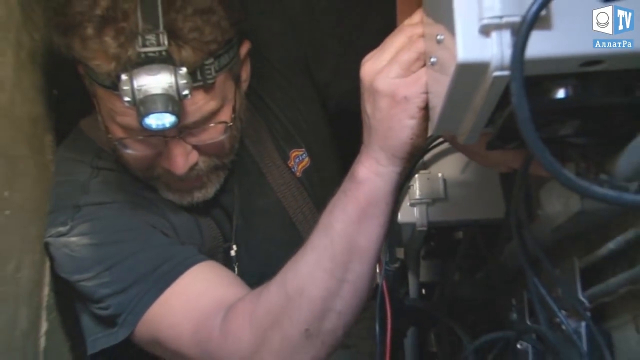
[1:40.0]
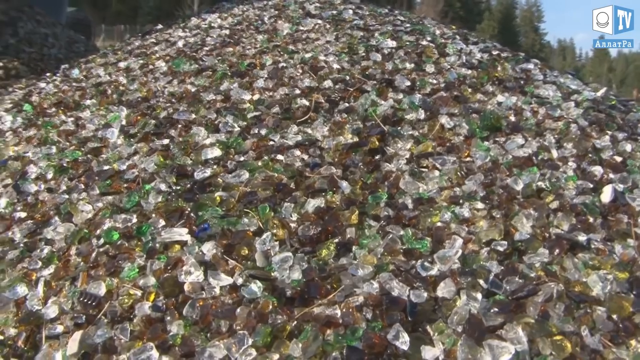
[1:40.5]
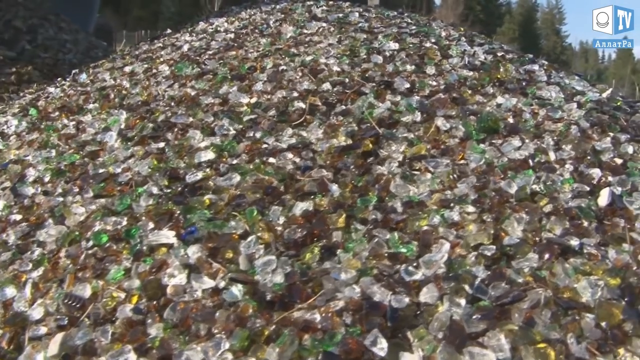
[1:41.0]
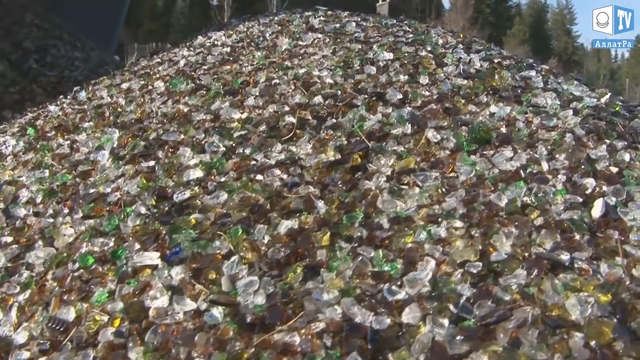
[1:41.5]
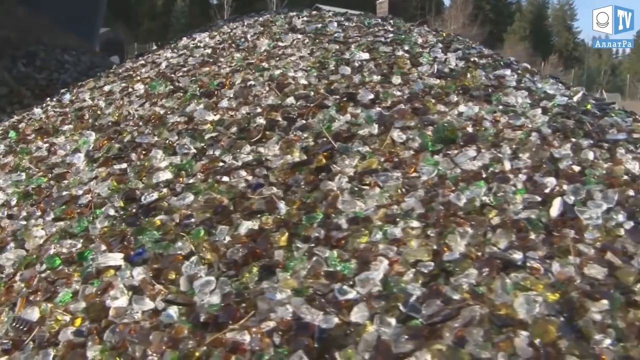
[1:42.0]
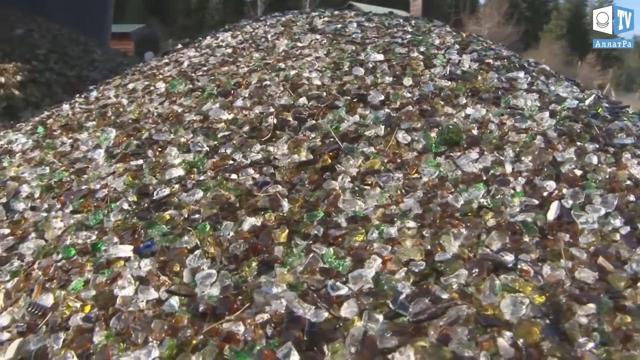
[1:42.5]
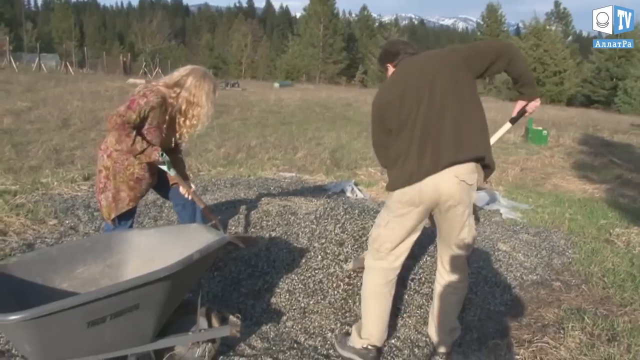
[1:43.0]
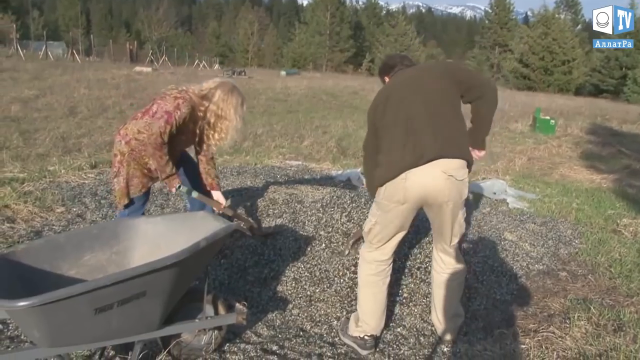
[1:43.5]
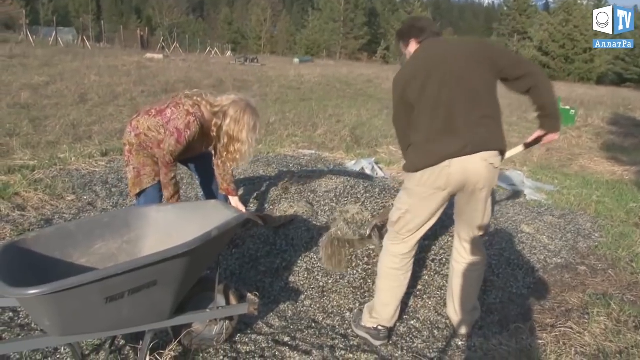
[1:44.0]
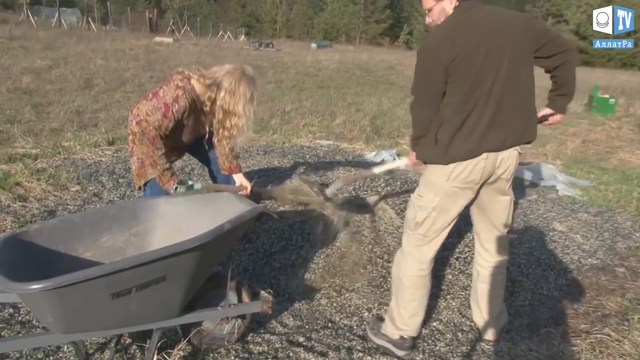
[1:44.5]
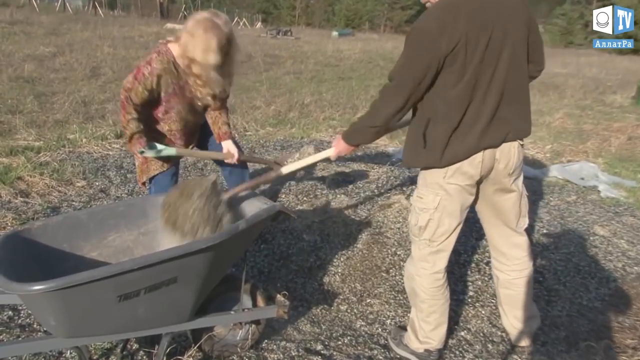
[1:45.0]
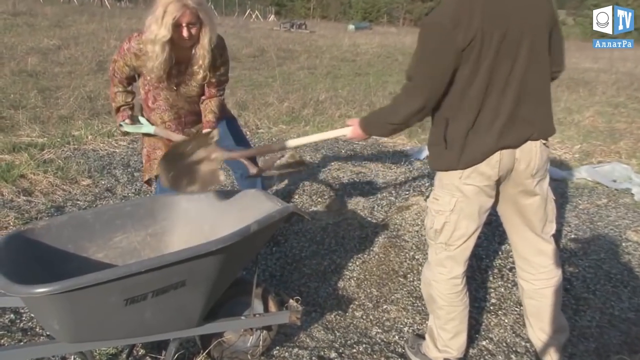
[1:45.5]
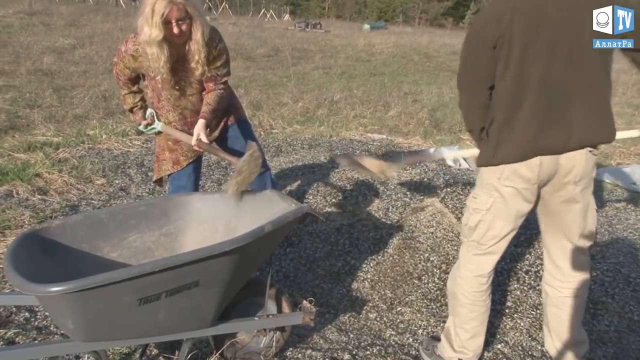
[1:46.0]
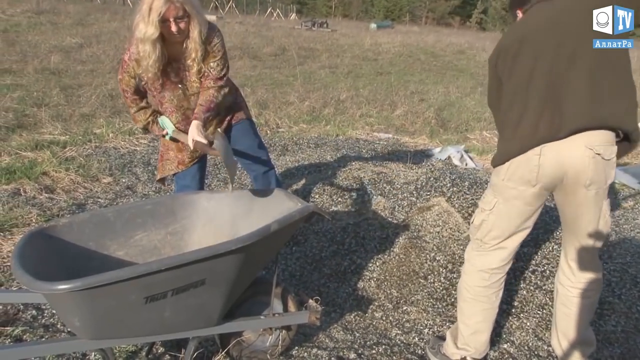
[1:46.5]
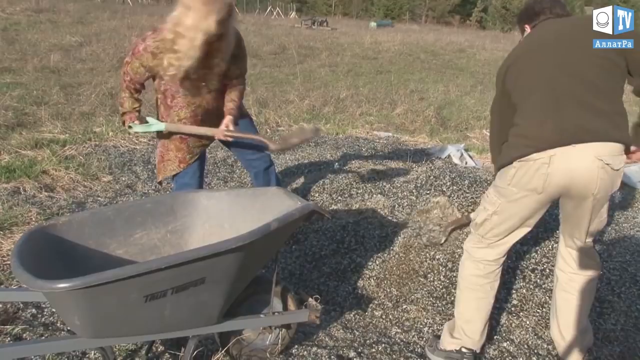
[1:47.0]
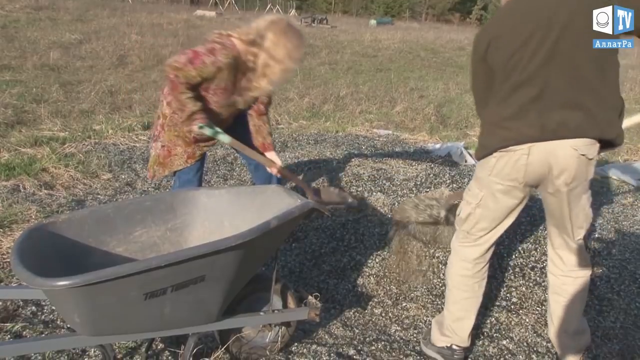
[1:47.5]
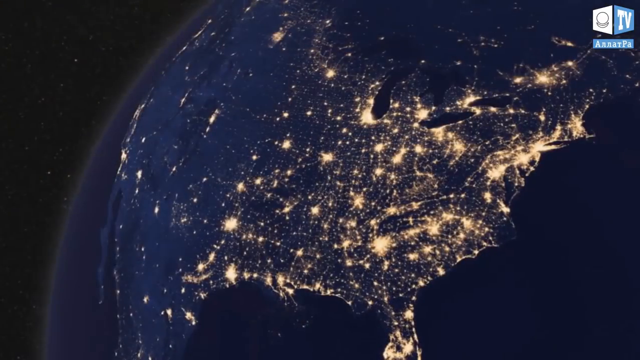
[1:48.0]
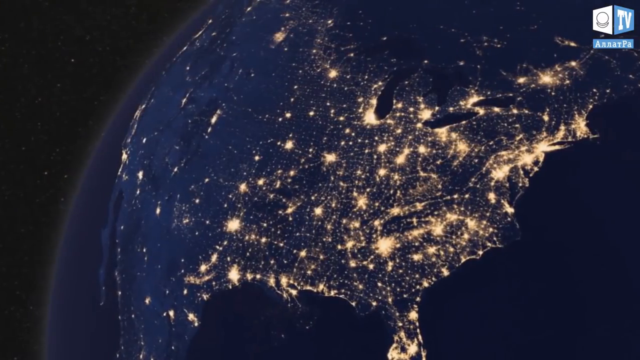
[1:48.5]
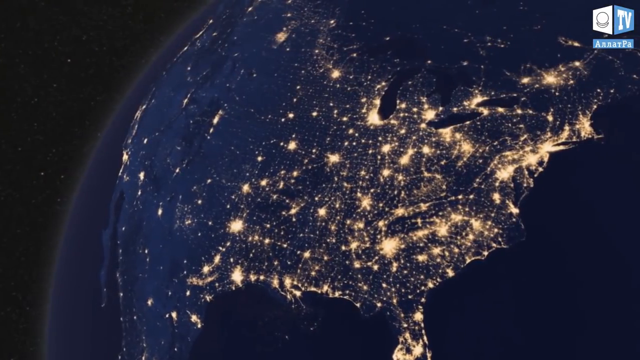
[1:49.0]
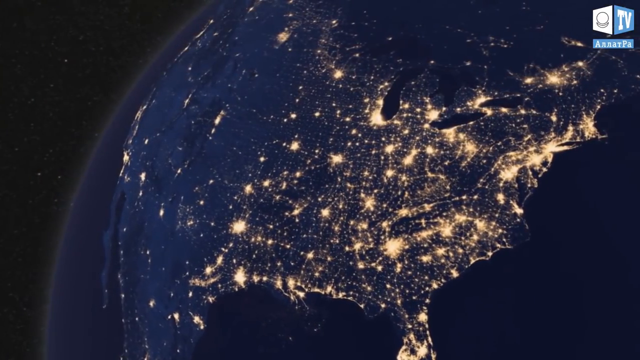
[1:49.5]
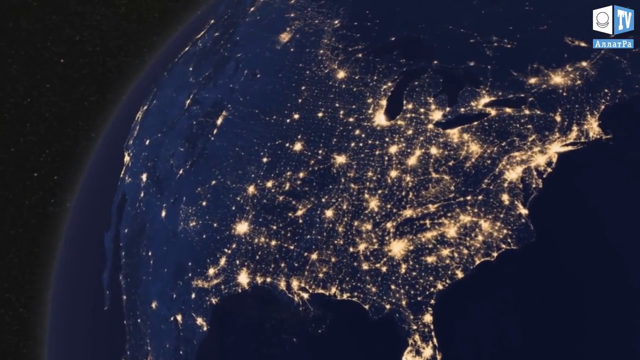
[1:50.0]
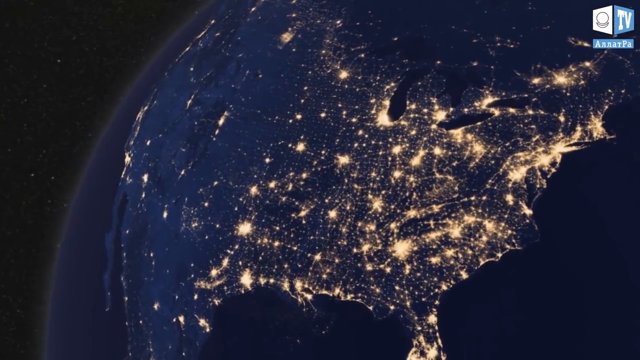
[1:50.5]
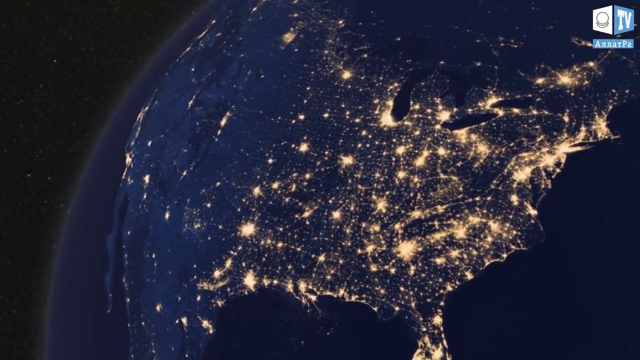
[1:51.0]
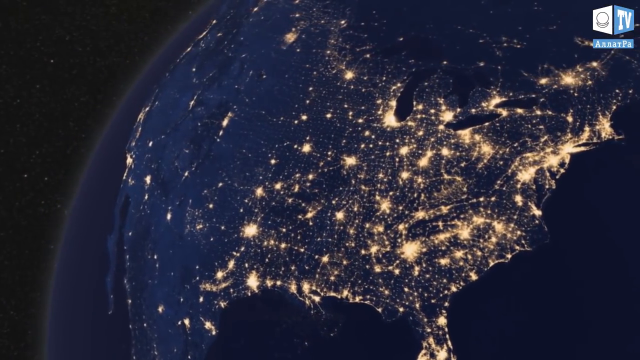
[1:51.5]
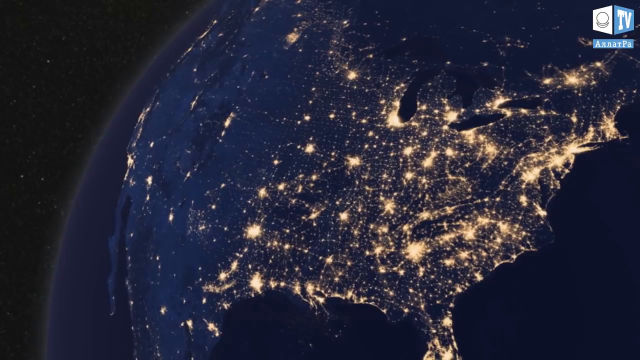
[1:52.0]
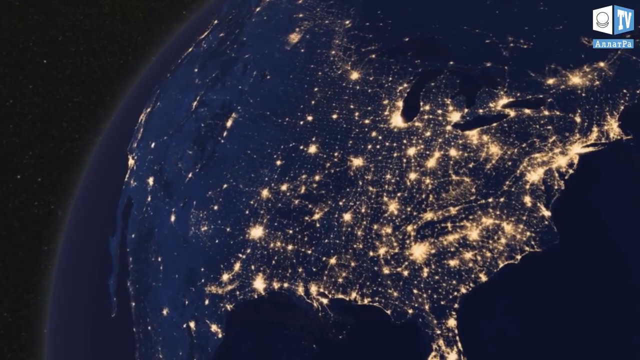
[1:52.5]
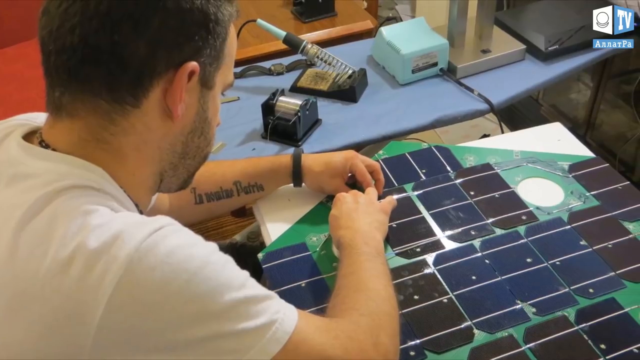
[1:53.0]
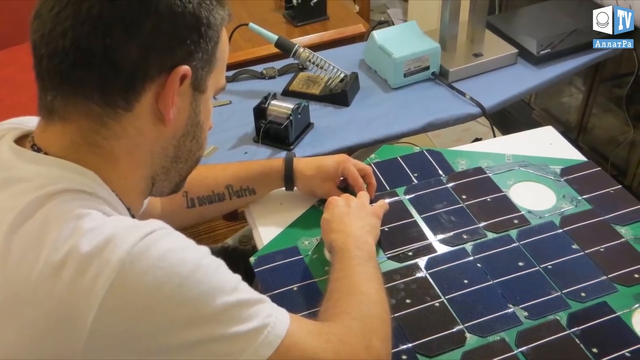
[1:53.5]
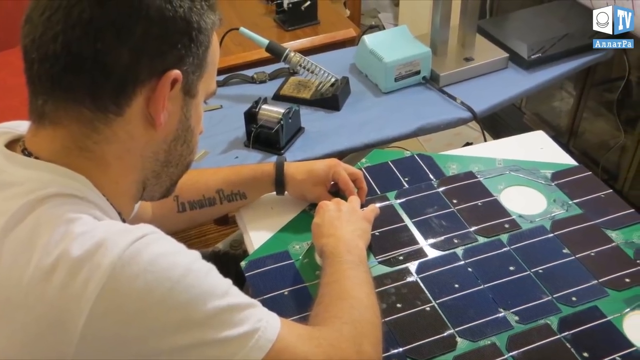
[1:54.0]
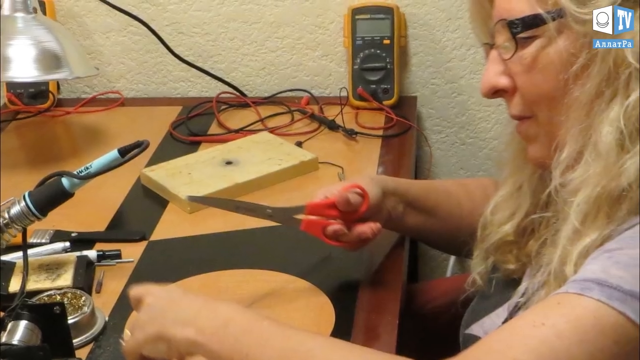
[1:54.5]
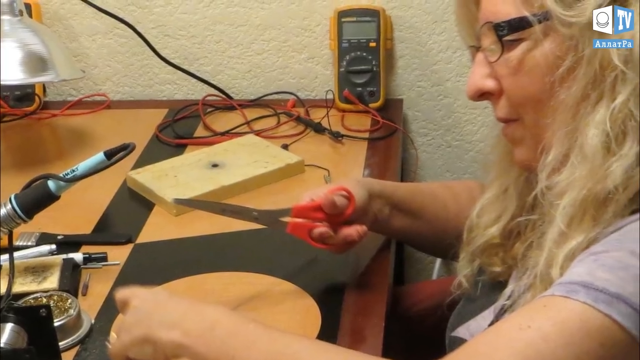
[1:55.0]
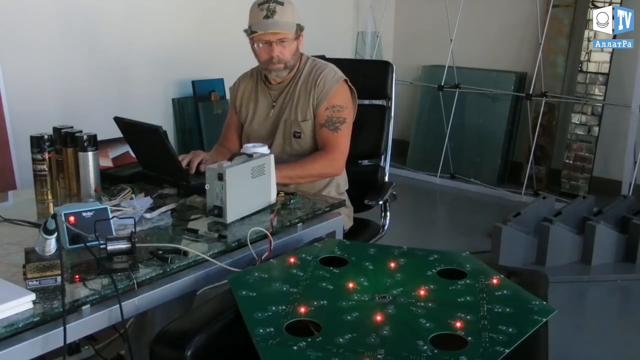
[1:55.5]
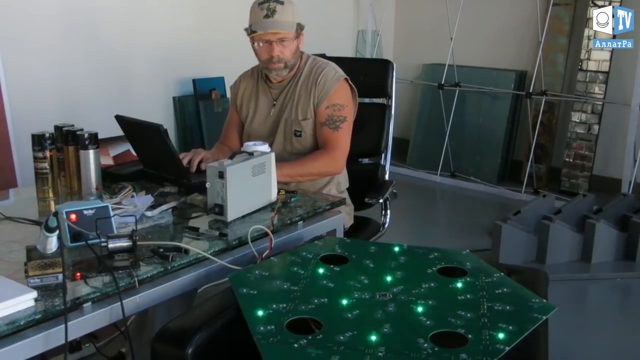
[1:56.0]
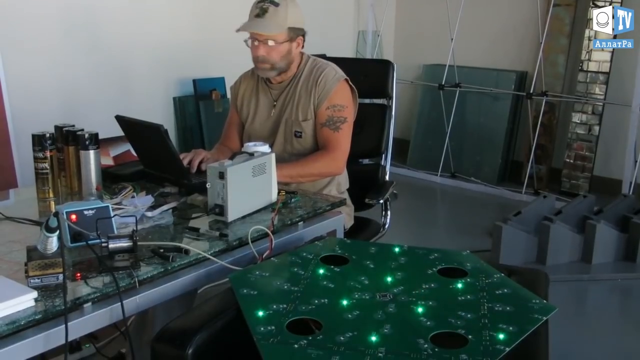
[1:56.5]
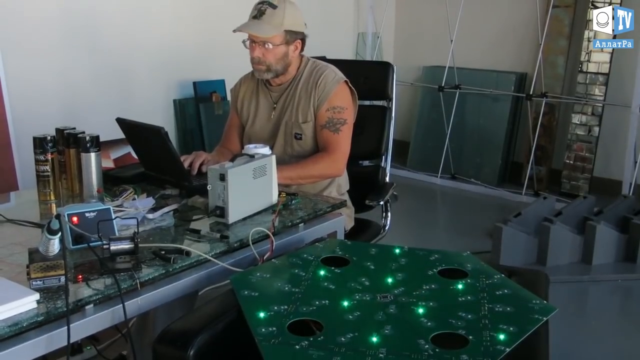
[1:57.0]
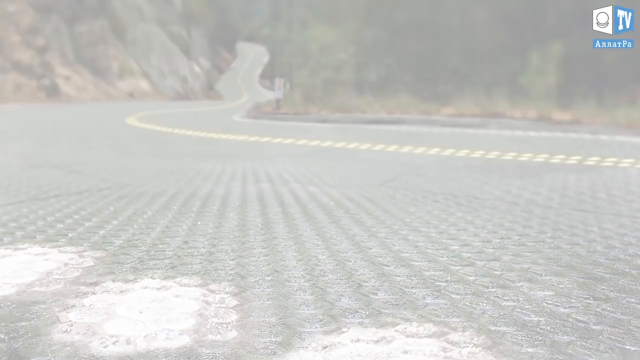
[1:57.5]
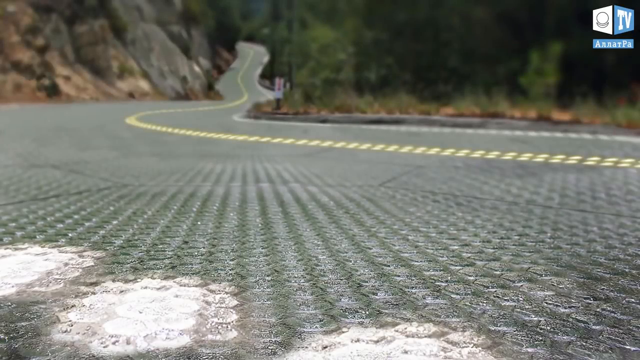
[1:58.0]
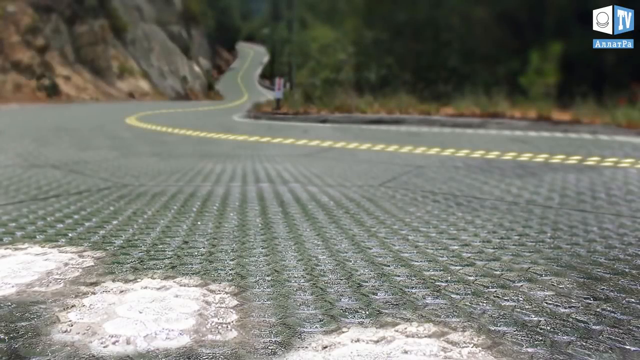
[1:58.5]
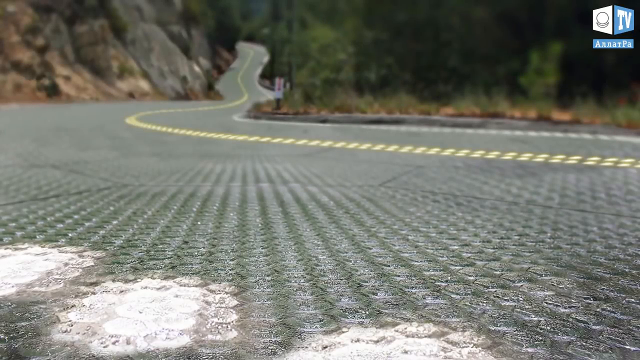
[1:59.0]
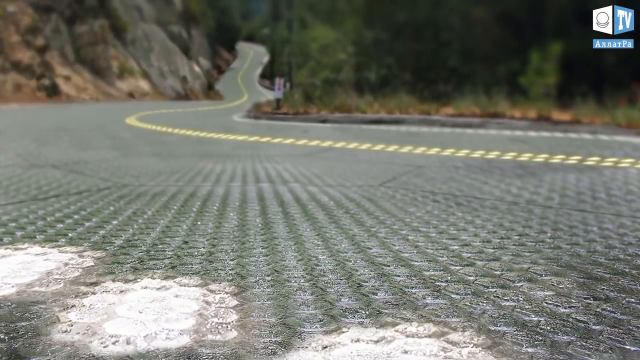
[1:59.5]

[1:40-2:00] The blue bubble letters appear with the red roof of a home; in the background is a maroon roof, and both houses are white. At the top, text says "Eco Rast TV" in white and blue. The octagons are shown on a concrete driveway with a metal side and pine trees in the back. The woman's shirt has very colorful flowers and purple buttons. The green road animated on the computer appears. A desolate stretch of two-lane asphalt highway with two lines running through it goes into the valley, with no town. All that is visible is the highway surrounded by green trees, grass and blue sky; it is evening, the clouds are dark blue, and the road goes off into the horizon. There are tan-colored light or telephone poles, and some asphalt off to the side where the road kind of ends. The octagons appear again, about a hundred of them, green-blue on a mat, and the man makes them on top of glass in his office. Metal crates are behind them.